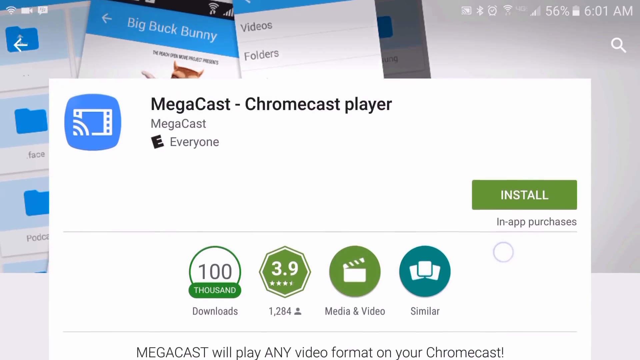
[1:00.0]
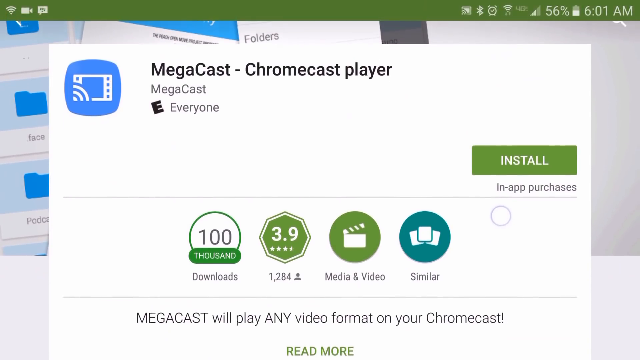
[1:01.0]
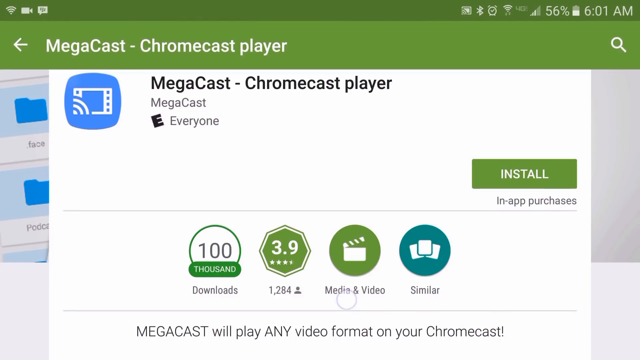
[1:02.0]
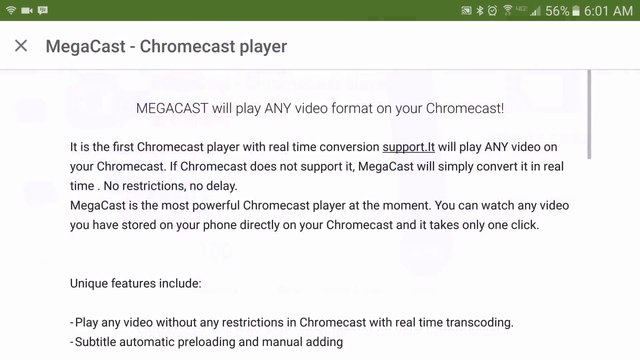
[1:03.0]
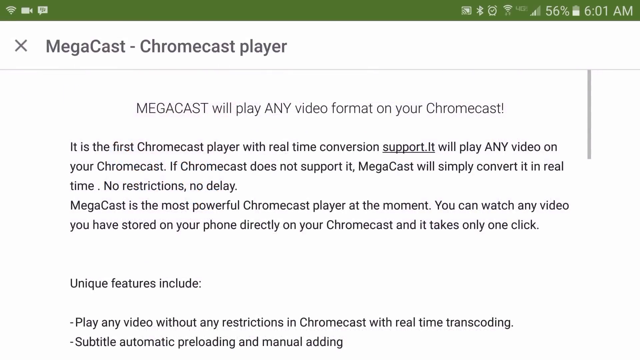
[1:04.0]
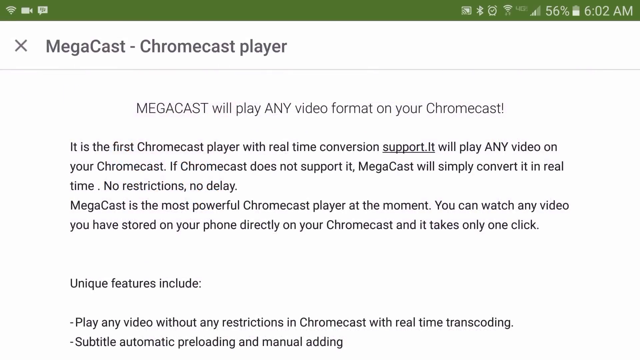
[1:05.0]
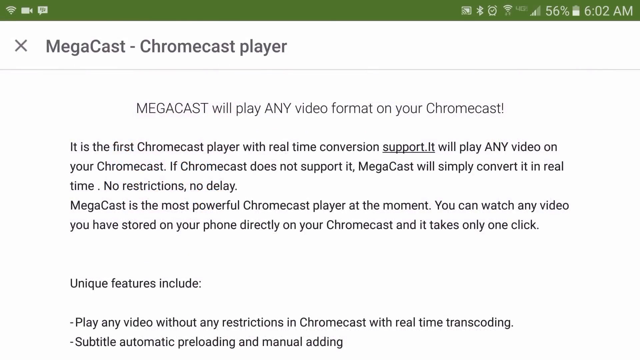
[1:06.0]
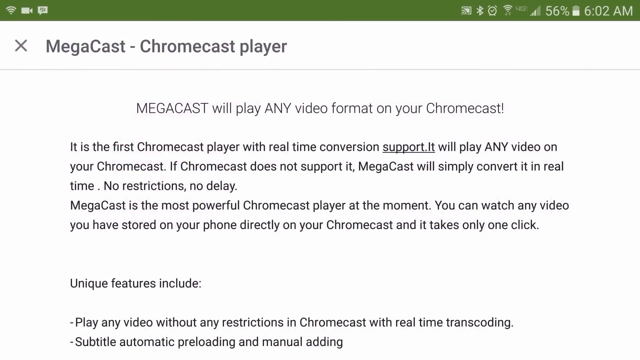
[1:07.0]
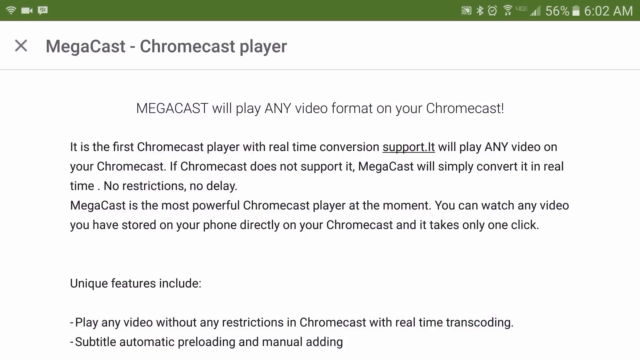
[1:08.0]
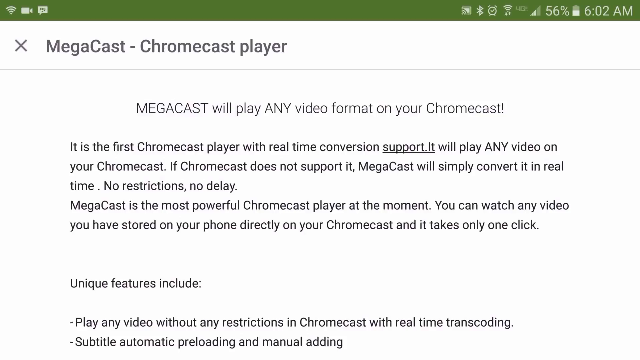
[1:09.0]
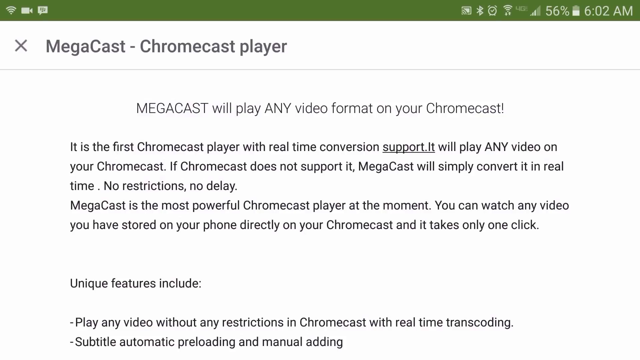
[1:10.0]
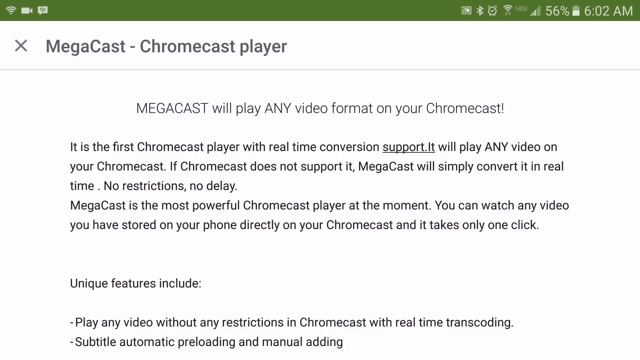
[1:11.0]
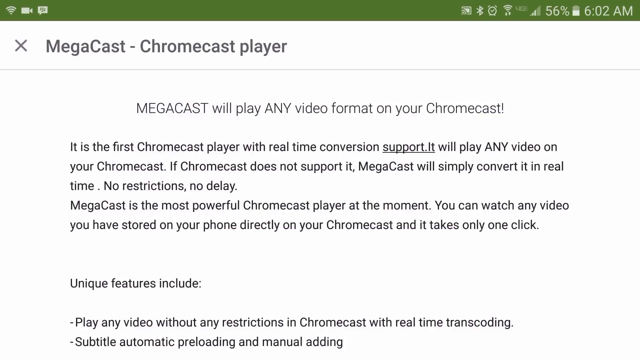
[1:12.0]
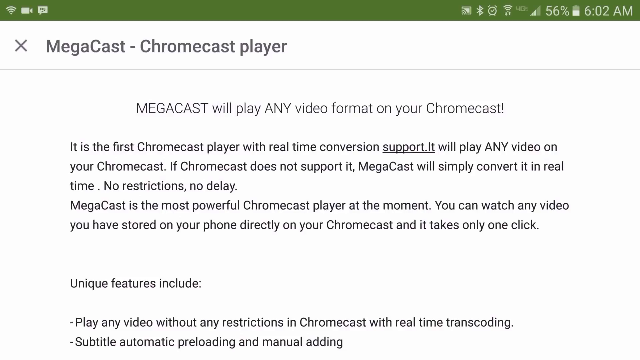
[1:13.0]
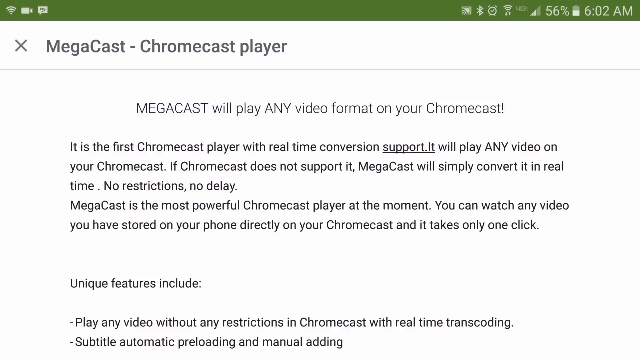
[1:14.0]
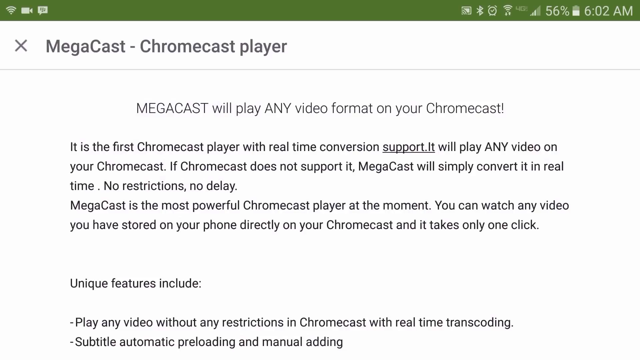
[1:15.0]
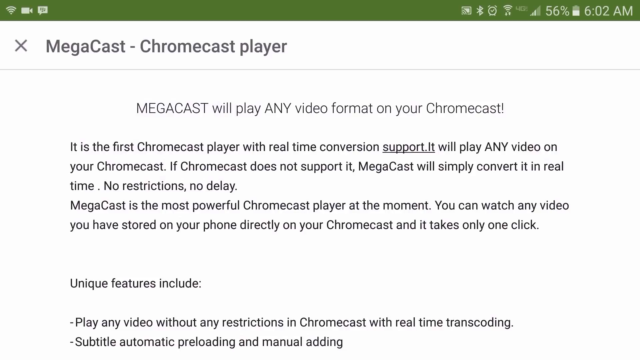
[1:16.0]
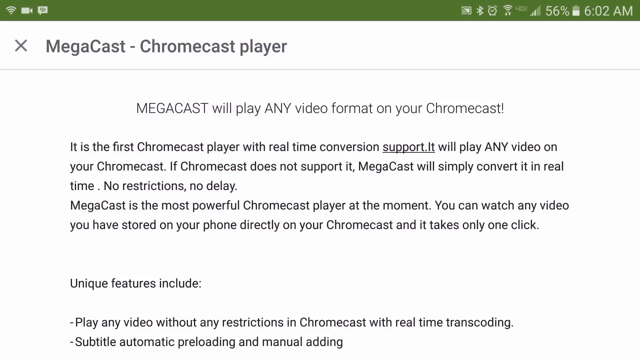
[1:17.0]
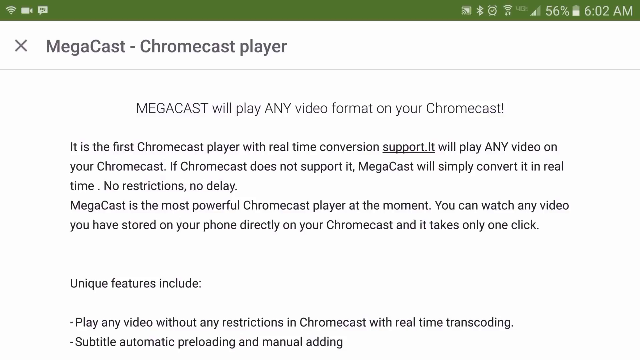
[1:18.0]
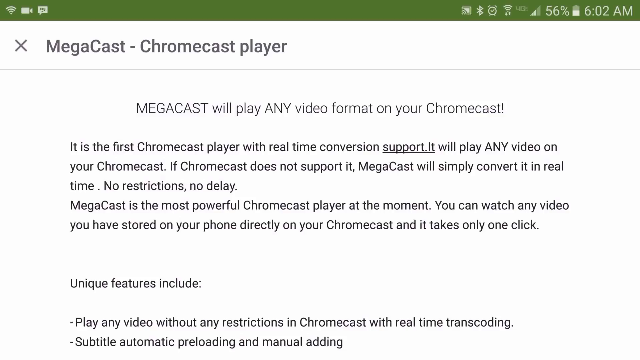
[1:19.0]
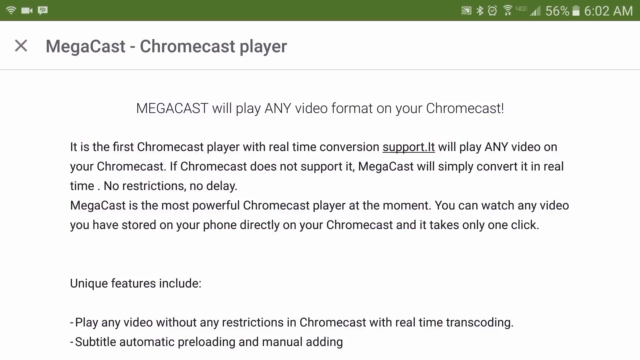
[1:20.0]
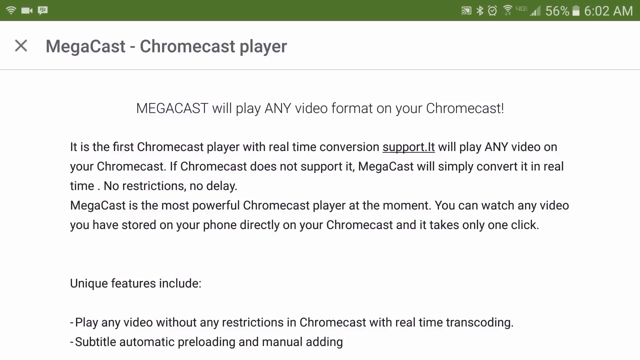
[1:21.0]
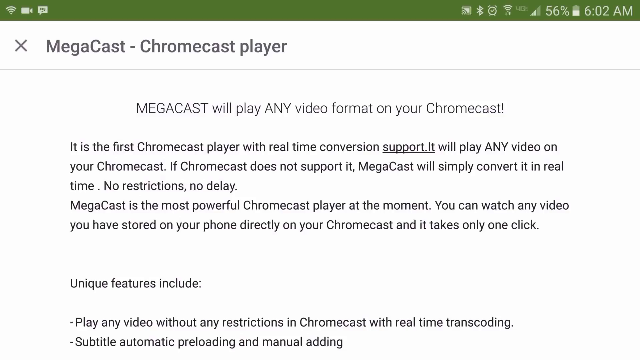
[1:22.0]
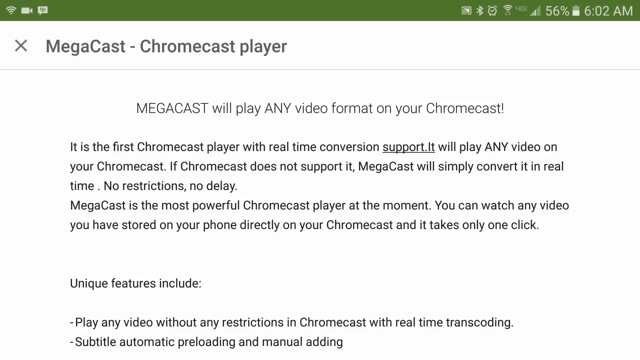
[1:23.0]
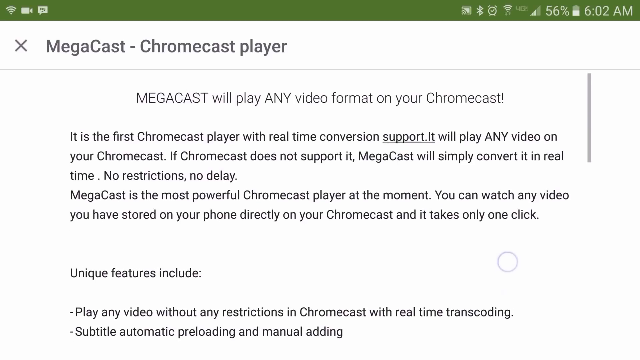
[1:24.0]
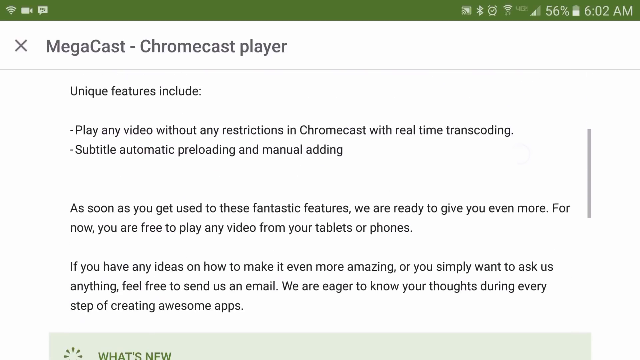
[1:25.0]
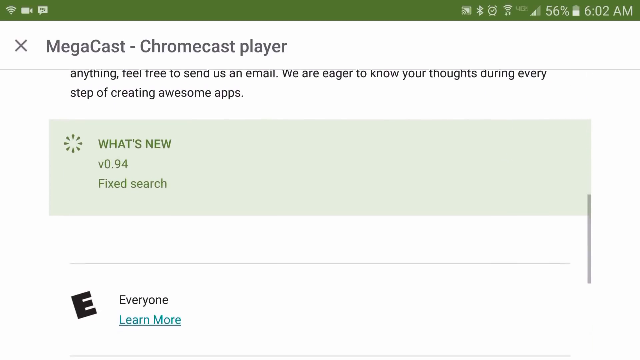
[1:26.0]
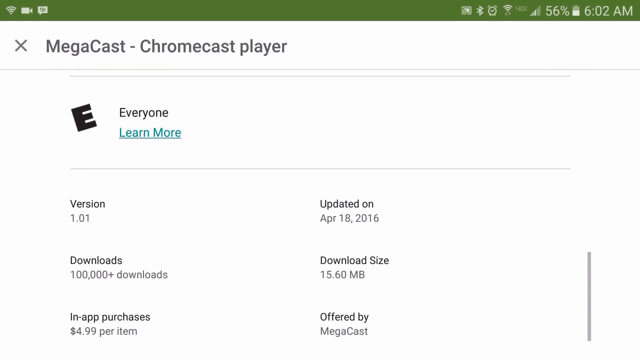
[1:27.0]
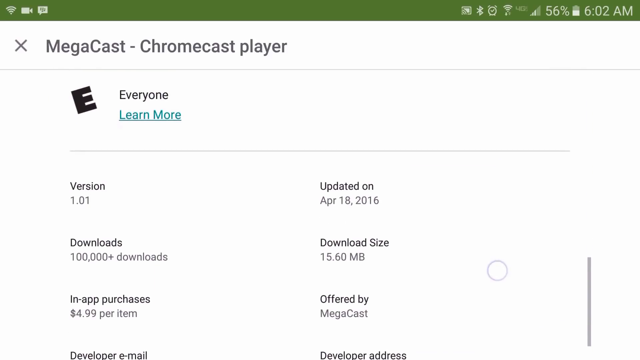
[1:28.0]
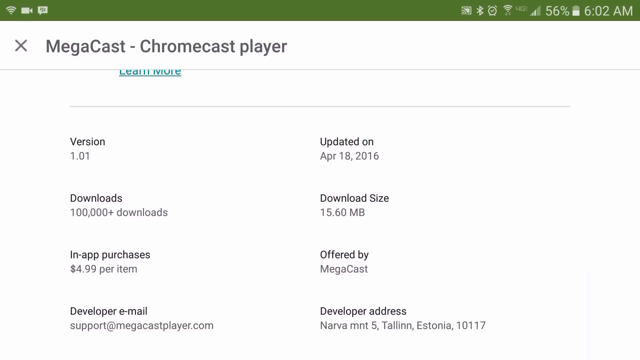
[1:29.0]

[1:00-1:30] The install page for the app "Megacast/Chromecast Player" from Megacast is shown, rated for everyone, with 100,000 reviews, a 3.9 rating, and the category media and video. The page moves around a little and then flips to a Megacast Chromecast Player write-up that says "Megacast will play any video format on your Chromecast. It is your first Chromecast player with real-time conversation support." It also says "Megacast is the most powerful Chromecast player on the market. You can watch any video stored on your phone directly on the TV. With one click." At the bottom it says "unique features include", but no features are listed before it stops.